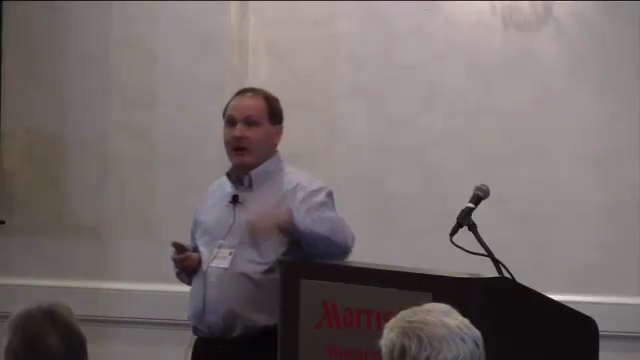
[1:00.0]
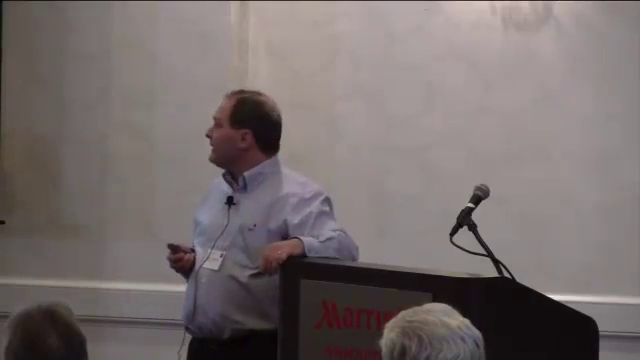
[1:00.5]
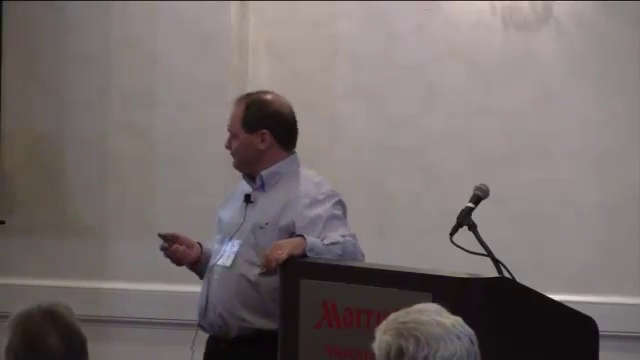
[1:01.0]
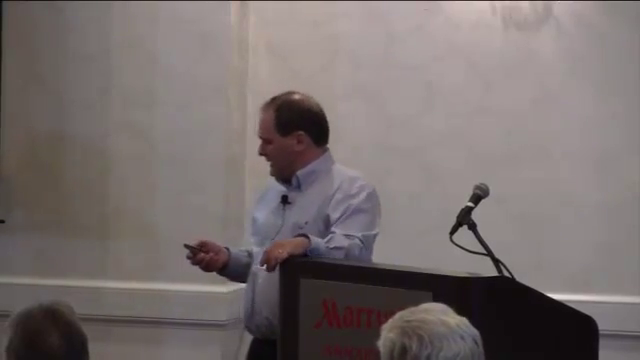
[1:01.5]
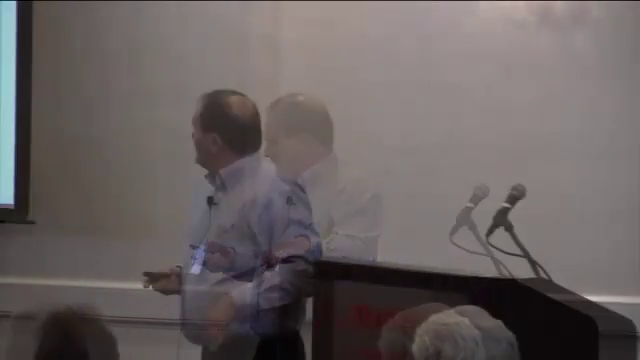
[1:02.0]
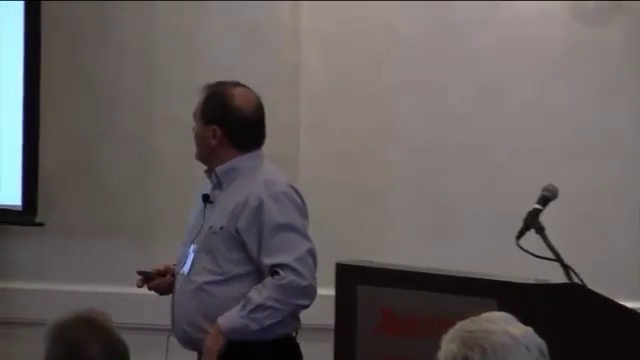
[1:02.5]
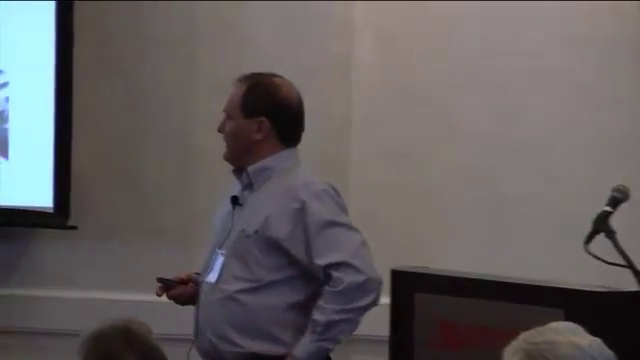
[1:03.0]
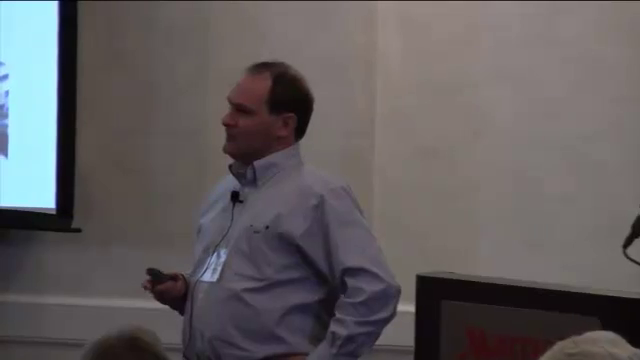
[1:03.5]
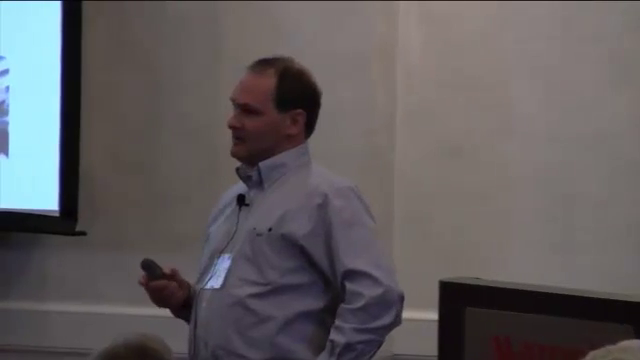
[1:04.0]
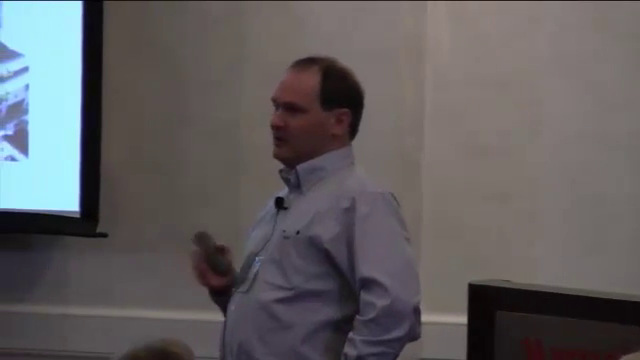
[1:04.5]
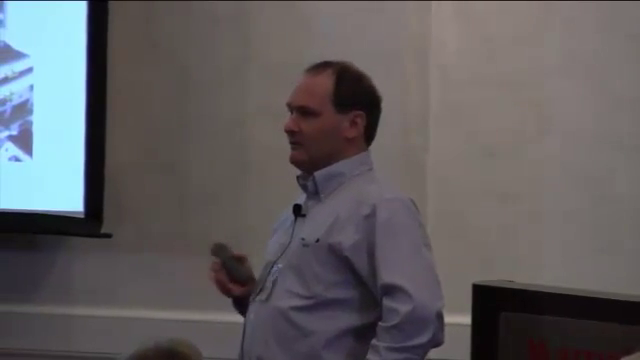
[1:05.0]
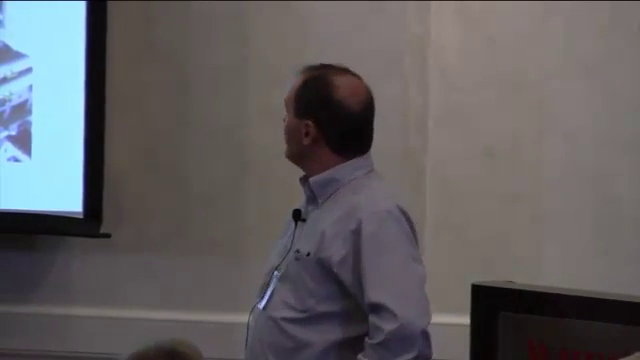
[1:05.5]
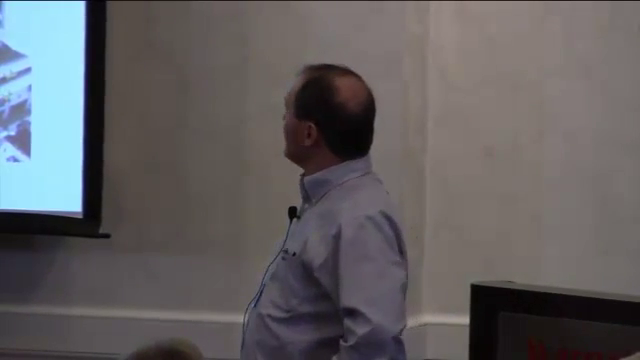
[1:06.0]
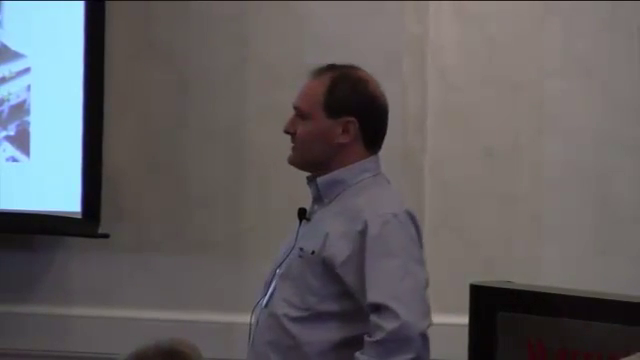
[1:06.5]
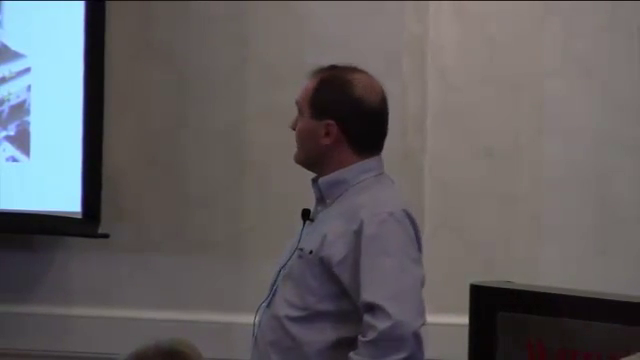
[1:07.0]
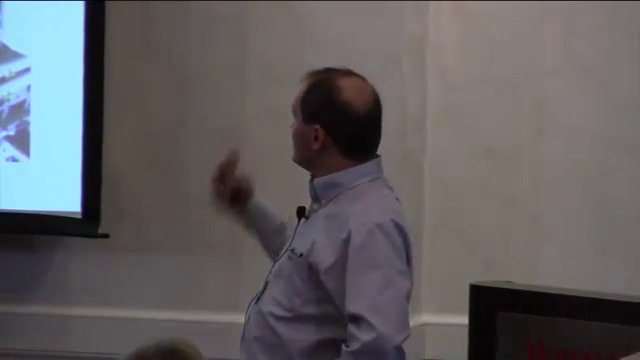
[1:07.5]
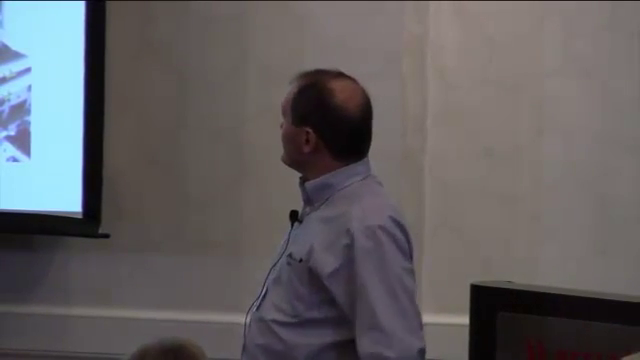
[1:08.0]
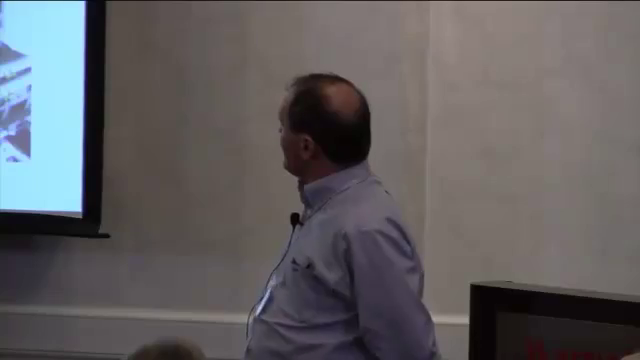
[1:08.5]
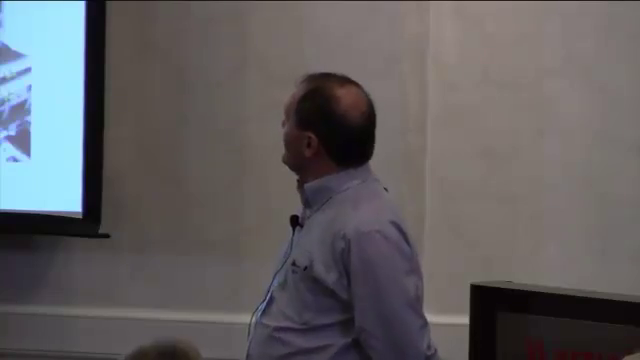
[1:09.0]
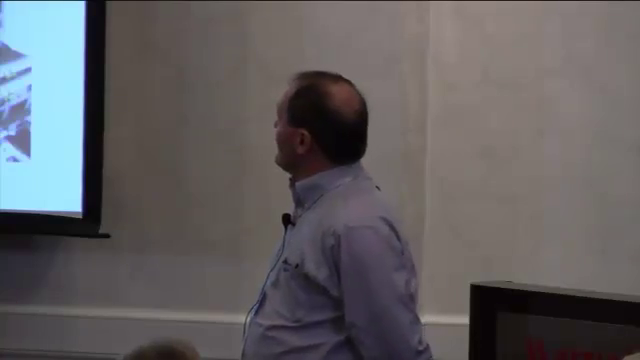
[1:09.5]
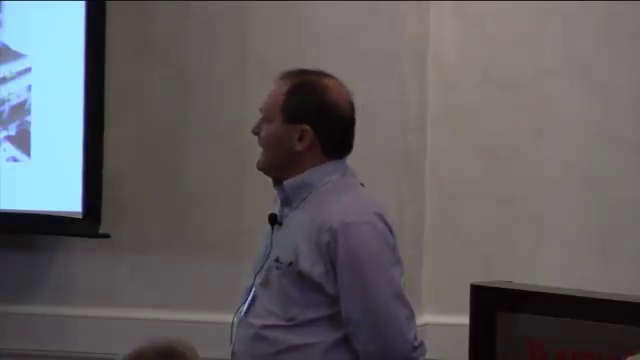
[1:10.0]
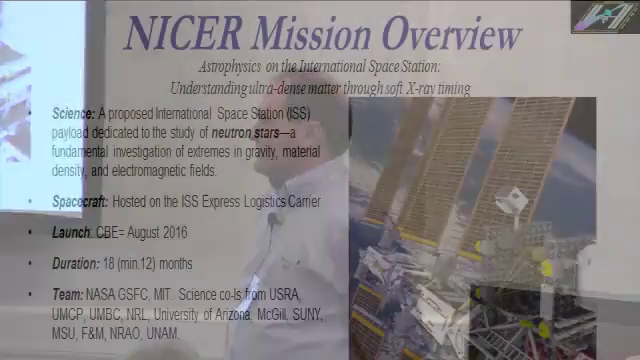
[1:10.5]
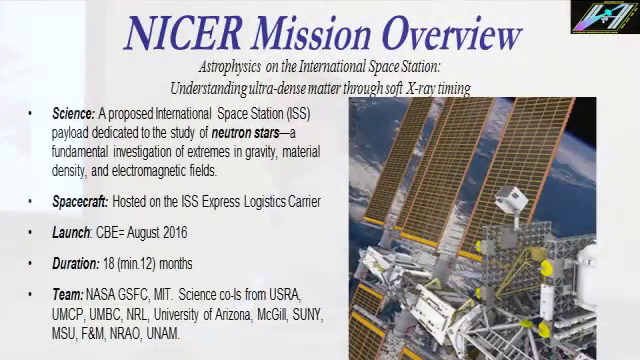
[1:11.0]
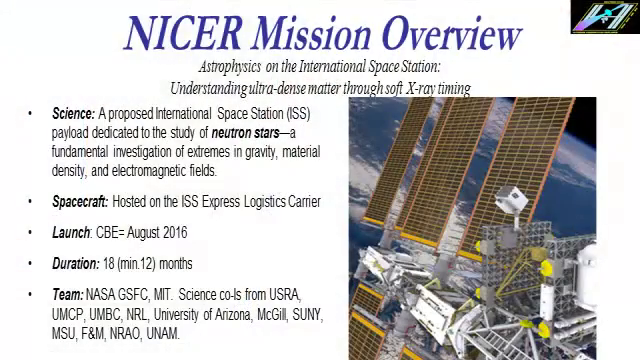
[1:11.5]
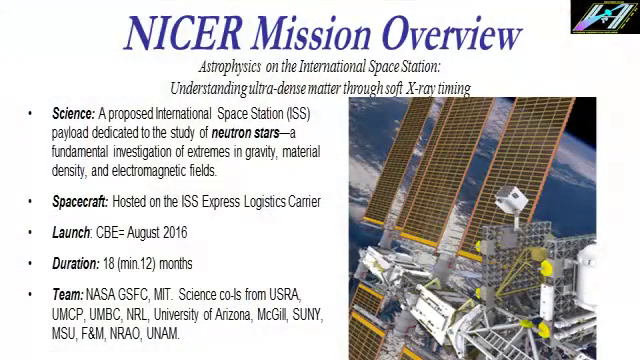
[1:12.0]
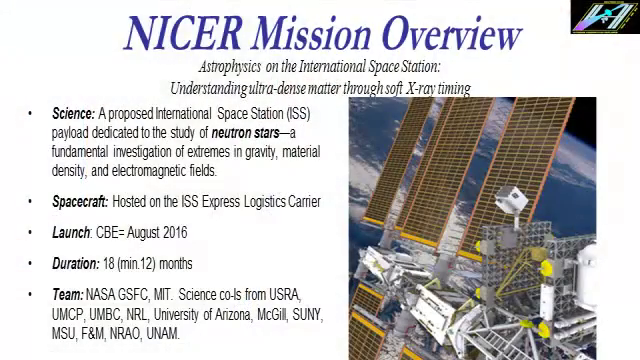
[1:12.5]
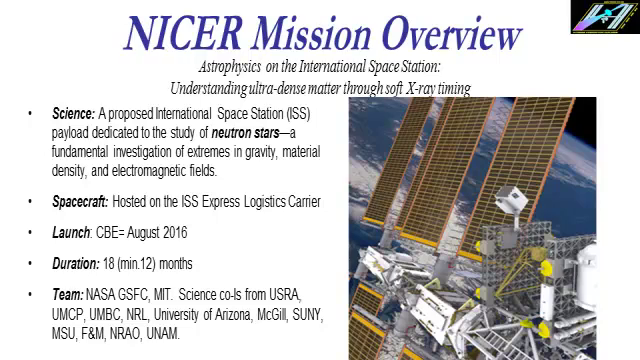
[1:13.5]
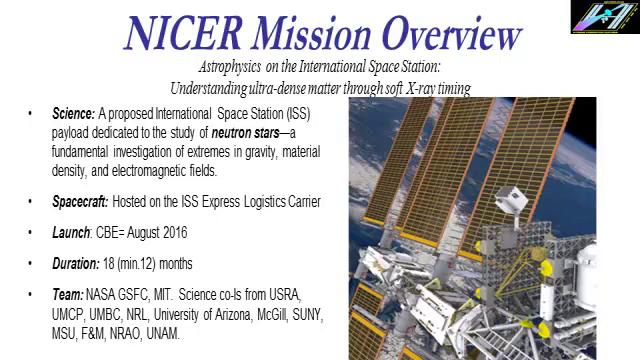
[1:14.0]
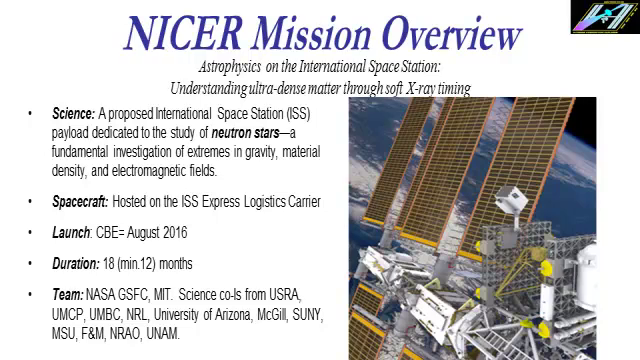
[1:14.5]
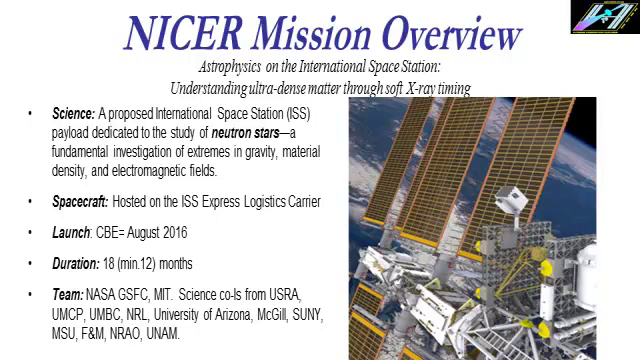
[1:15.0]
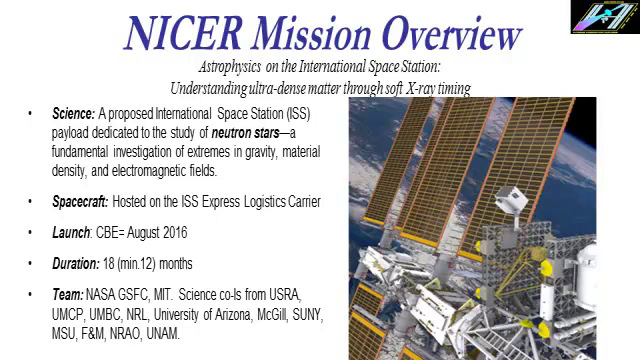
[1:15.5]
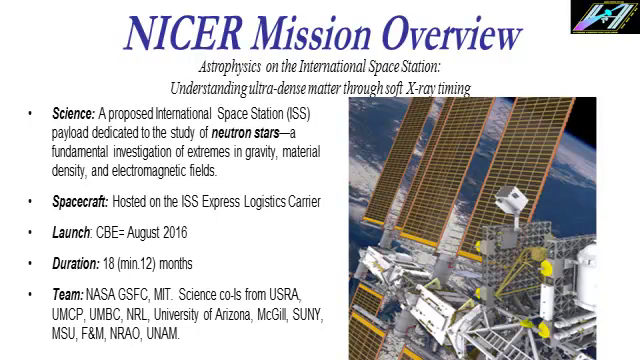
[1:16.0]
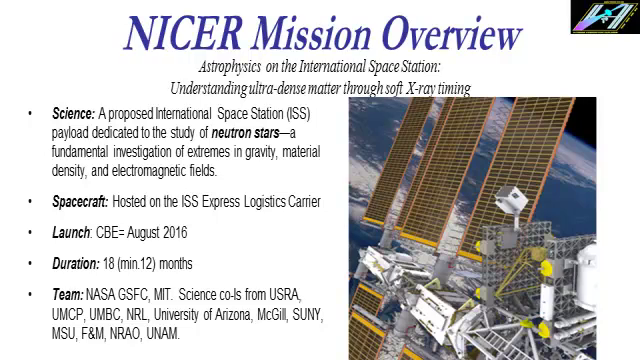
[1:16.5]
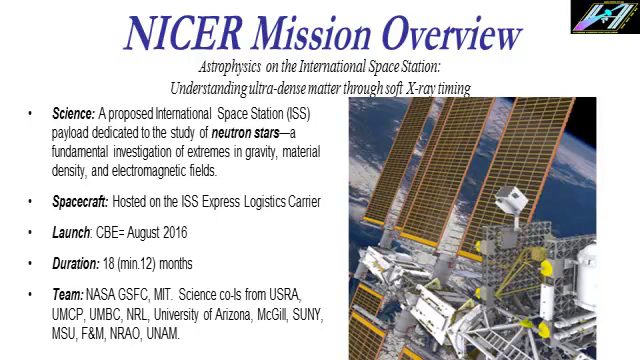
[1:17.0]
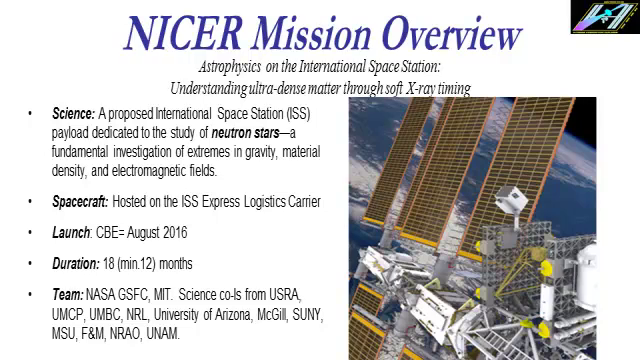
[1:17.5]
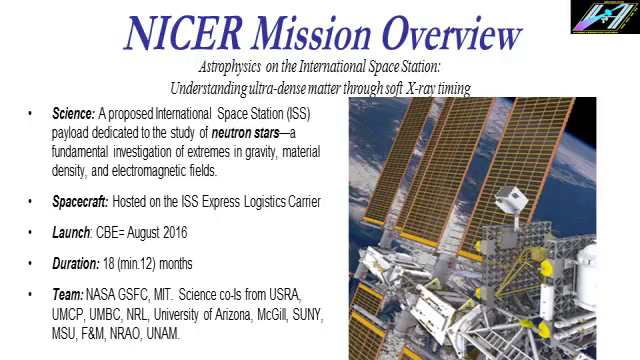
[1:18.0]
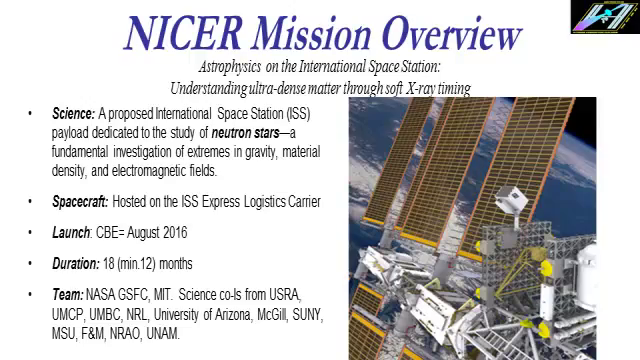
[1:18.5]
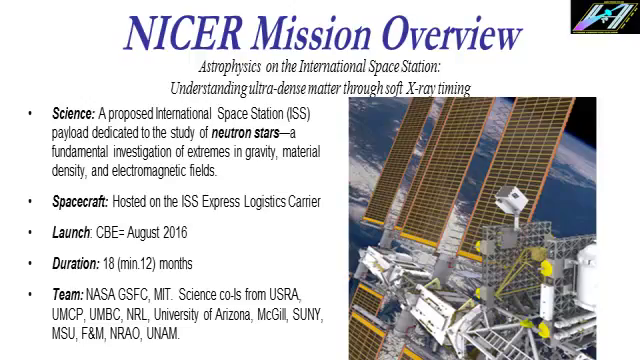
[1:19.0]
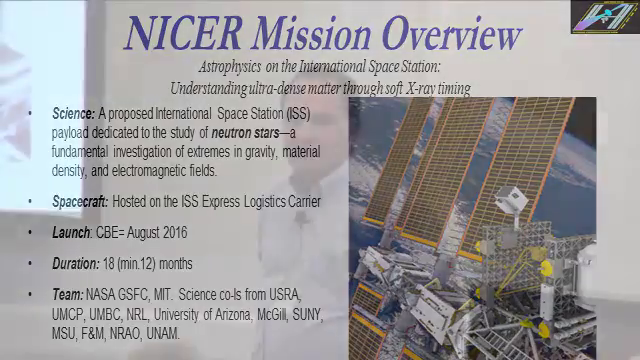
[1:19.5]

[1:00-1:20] The man with dark hair and a light-colored button-down shirt stands to the left side of the podium. The podium has a microphone attached to it, but he wears a clip-on microphone between the second and third buttons of his shirt. He speaks to gentlemen seated at dining tables in front of him, his left arm resting on the podium and a remote in his right hand. He steps farther from the podium and a little to the left as he continues speaking, then looks at the screen and gestures toward it with the remote. A page appears with "NICER mission overview" at the top in blue. Beneath it in black is a subtitle: "astrophysics on the International Space Station. Understanding ultra-dense matter through soft X-ray timing." On the right under the title is an image of some space equipment with four brown panels on top and a lot of white metal at its base. Text is on the left under the title. The first bullet point has the word "science" in bold black print followed by "a proposed International Space Station payload dedicated to the study of neutron stars, a fundamental investigation of extremes in gravity, material density, and electromagnetic fields." The second bullet point, in bold black, is "spacecraft": "Posted on the ISS Express Logistics Carrier." The third is "launch, CBE, August, 2016." The fourth is "duration, 18 (min 12) months." The next reads "team, NASA, GSFC, MIT, Science, CoLS from USRA, UMCP, UMBC, NRL, University of Arizona, McGill, SUNY, MSU, F&M, NRAO, UNAM."